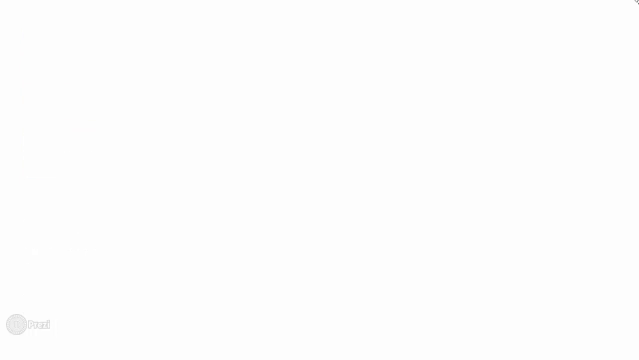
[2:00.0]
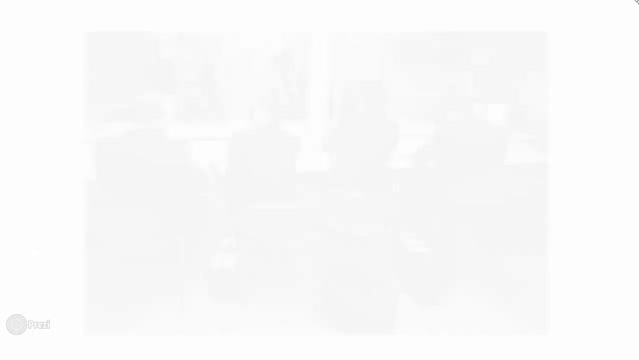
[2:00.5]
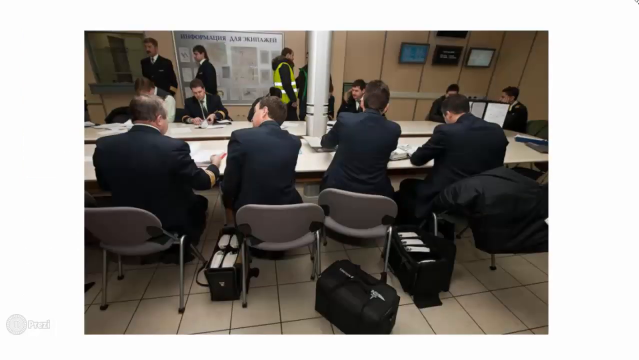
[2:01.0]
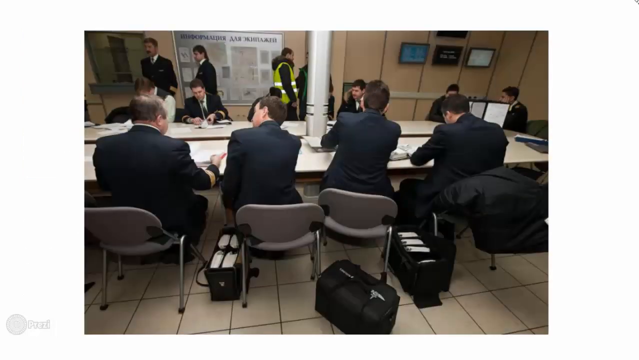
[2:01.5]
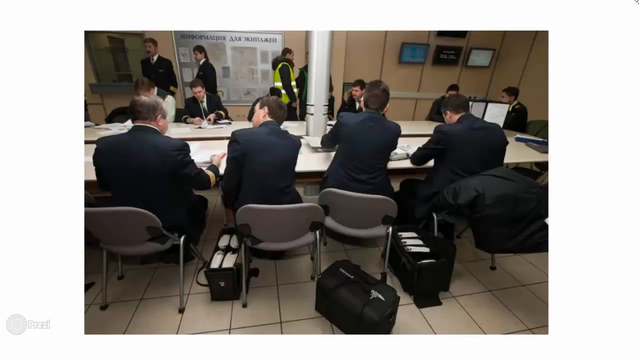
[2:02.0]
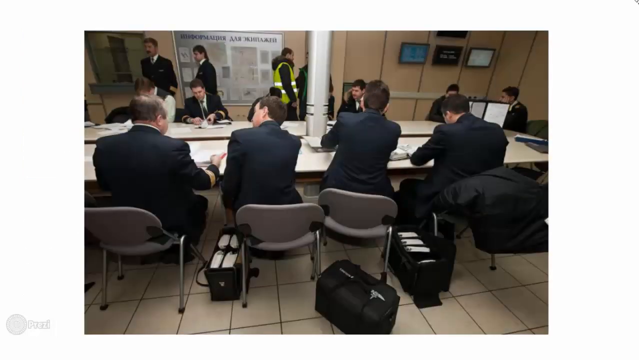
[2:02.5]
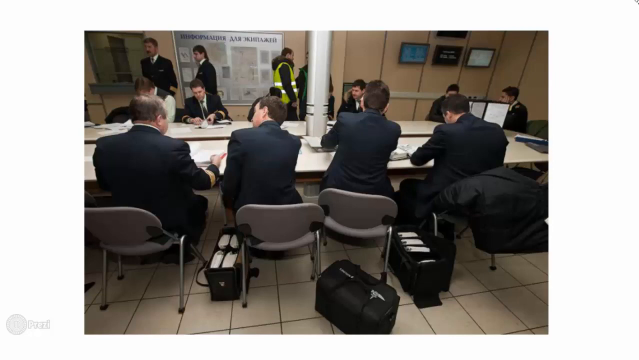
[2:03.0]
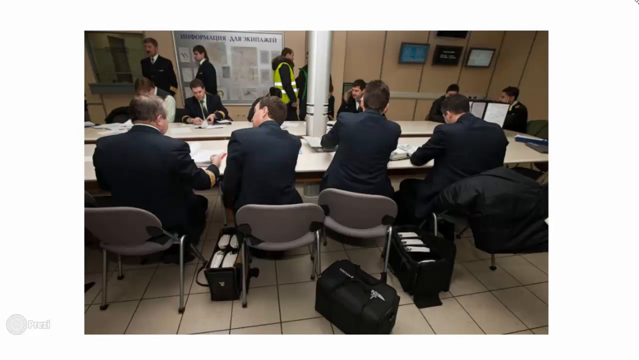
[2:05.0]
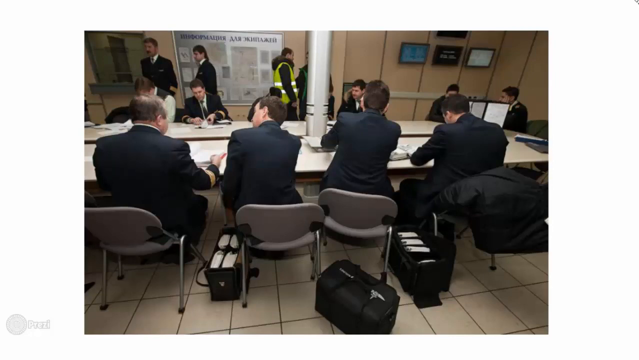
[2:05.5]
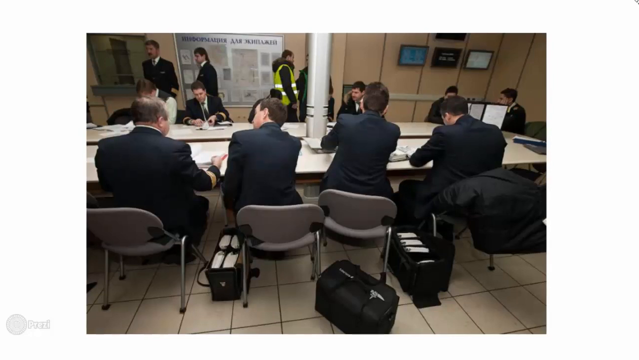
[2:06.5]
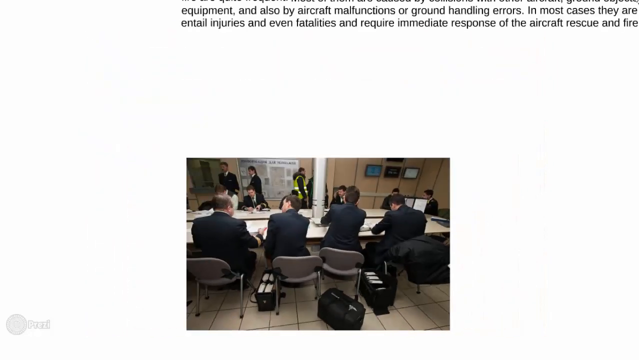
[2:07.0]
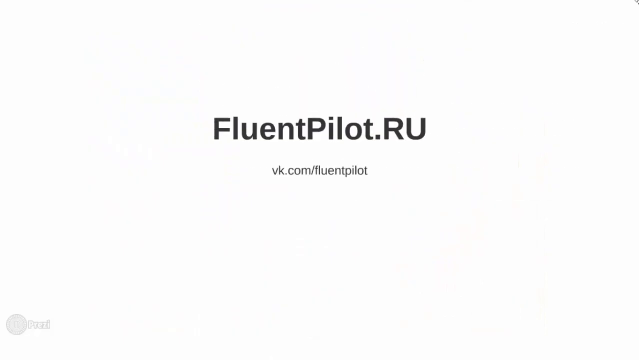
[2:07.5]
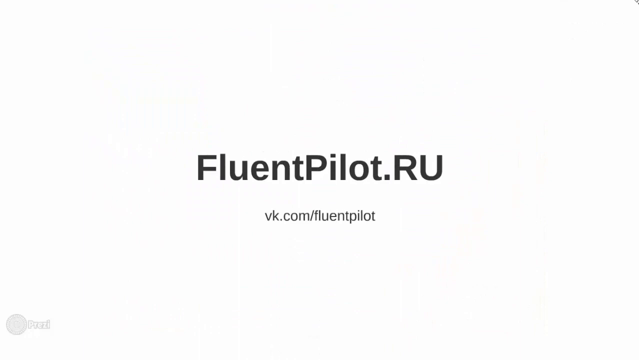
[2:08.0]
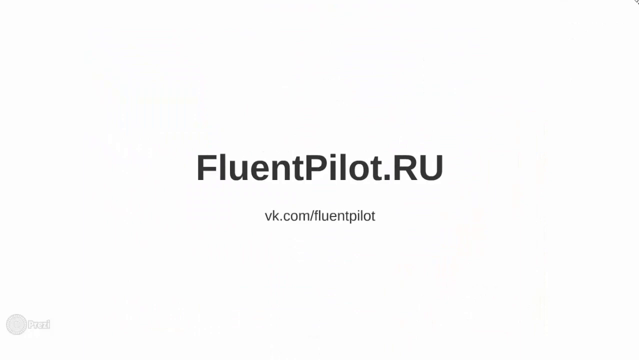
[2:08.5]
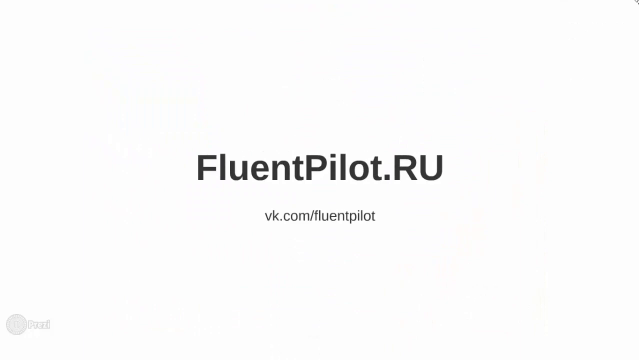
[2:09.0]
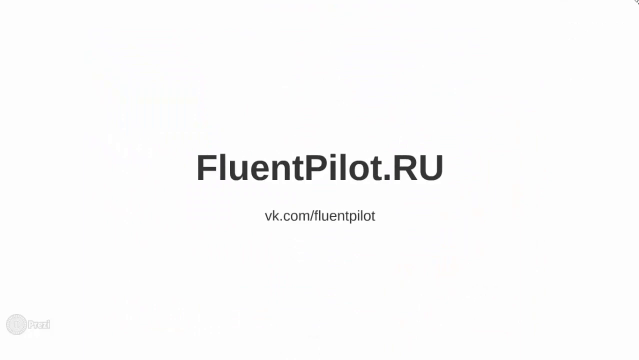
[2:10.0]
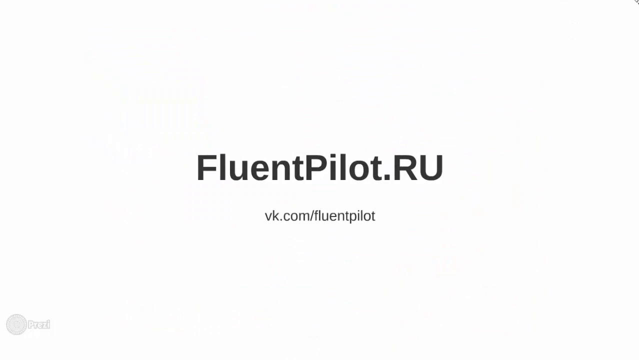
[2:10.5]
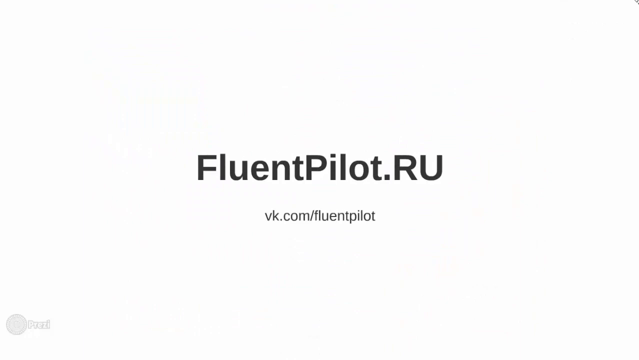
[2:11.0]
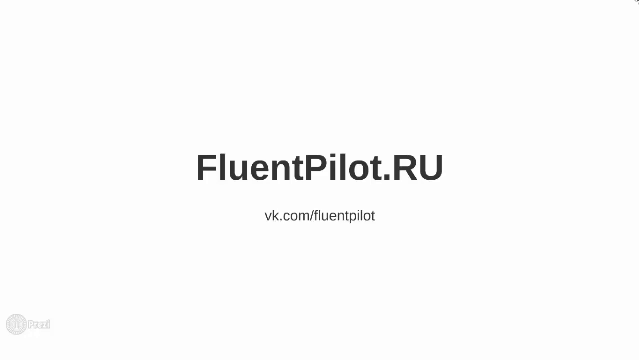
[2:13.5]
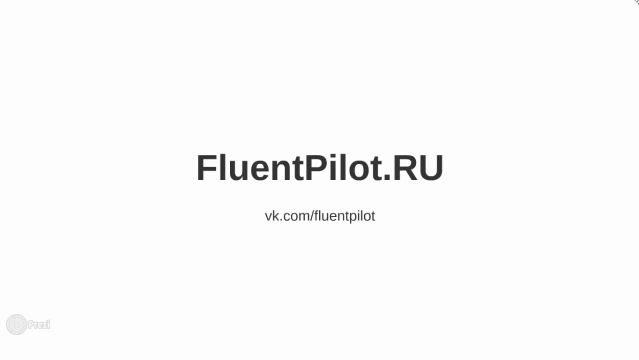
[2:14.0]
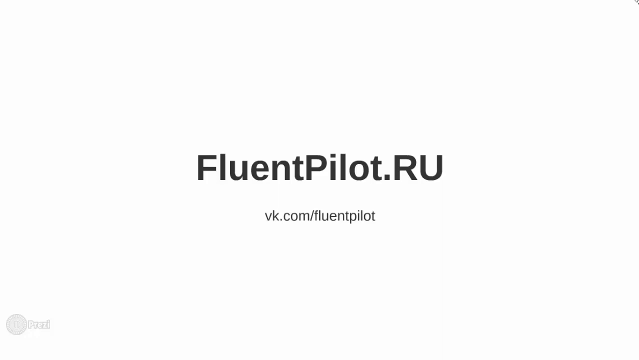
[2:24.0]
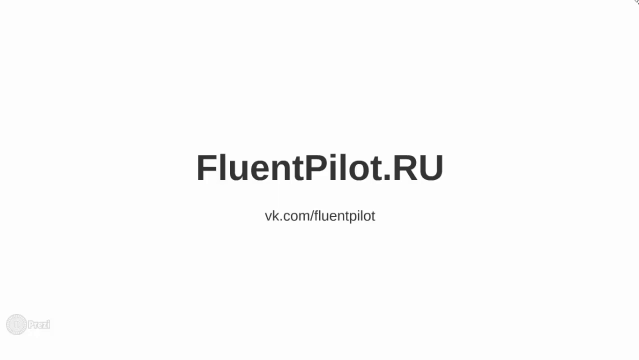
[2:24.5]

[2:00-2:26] A picture shows an indoor setting with a very large rectangular table and several people sitting in the room; most of them are men wearing suits and ties. On the wall are a couple of hung frames in various colors such as blue, black and white, and the chairs are light gray. Then an animation screen appears with a white background, and in the middle black words read "fluentpilot.ru", with "bk.com/fluentpilot" underneath. Not much else happens. The video is rectangular, of decent quality, with smooth transitions.